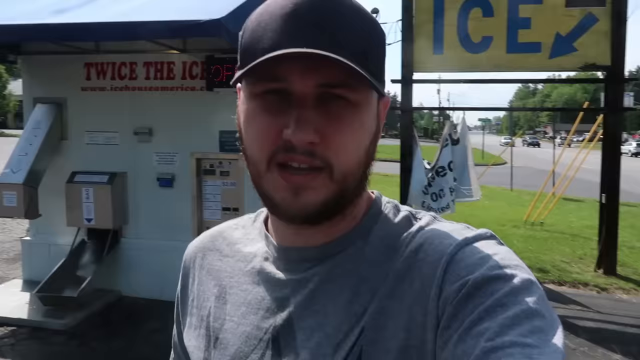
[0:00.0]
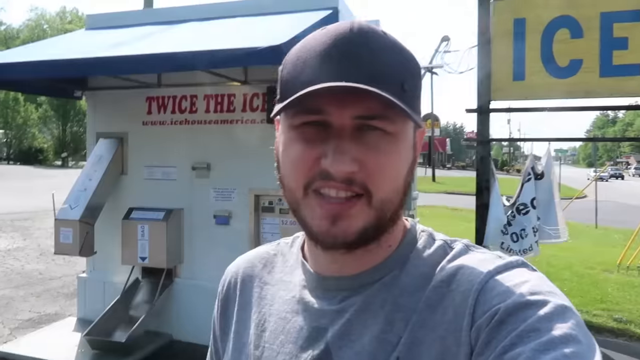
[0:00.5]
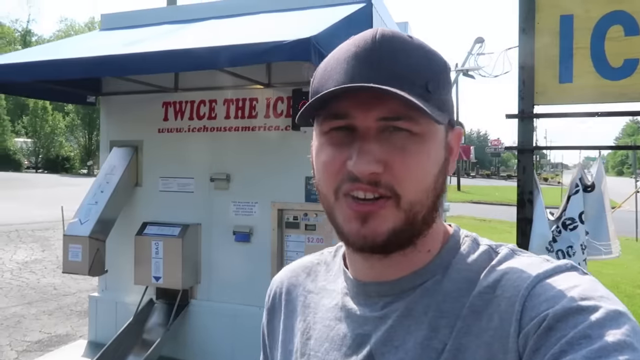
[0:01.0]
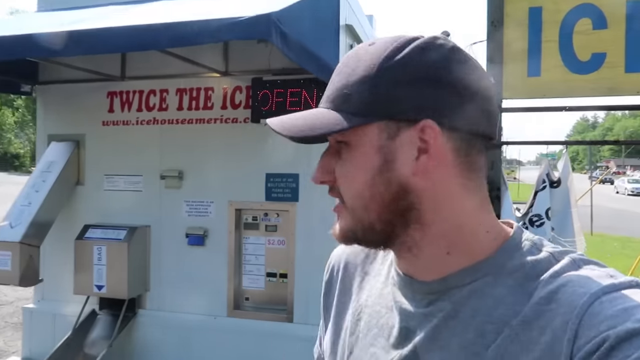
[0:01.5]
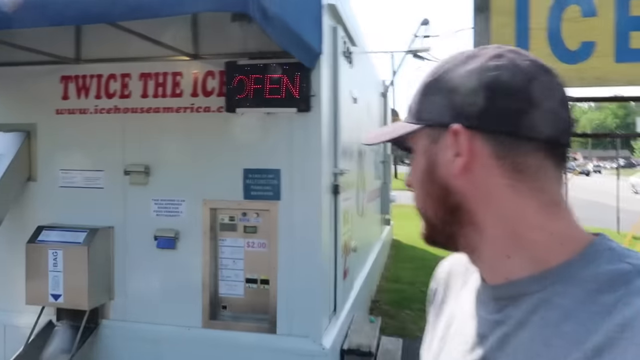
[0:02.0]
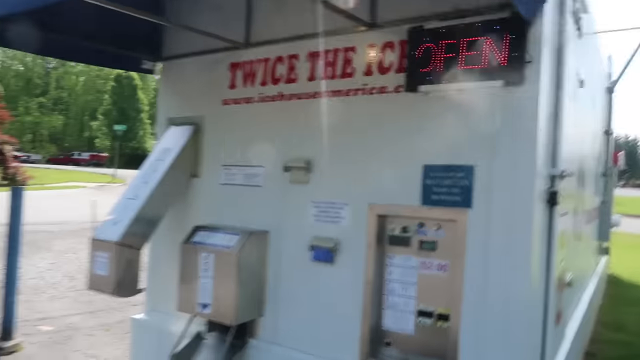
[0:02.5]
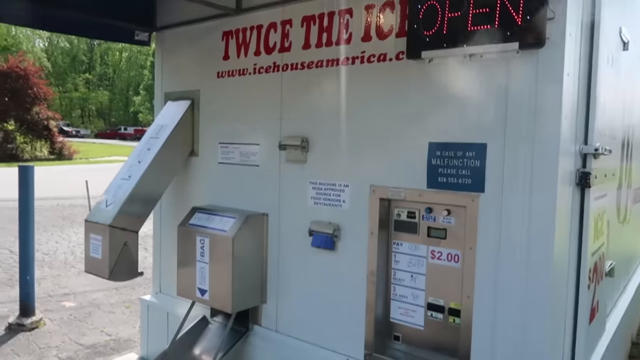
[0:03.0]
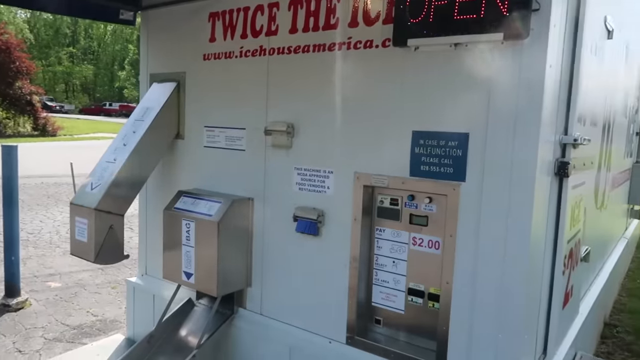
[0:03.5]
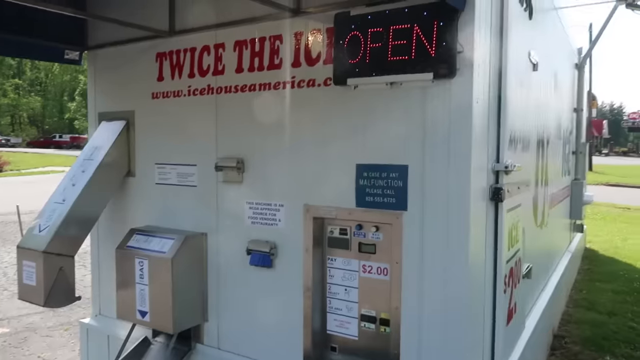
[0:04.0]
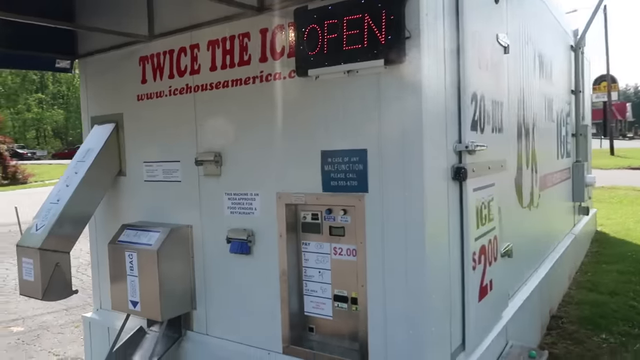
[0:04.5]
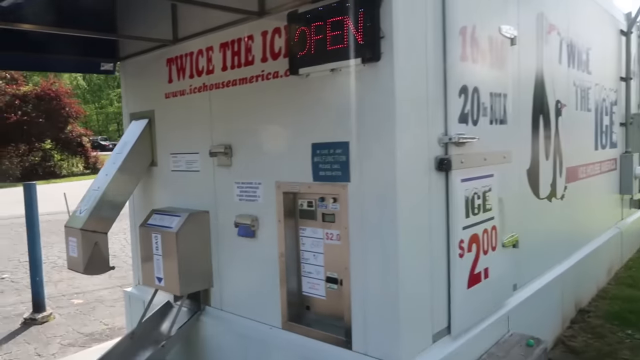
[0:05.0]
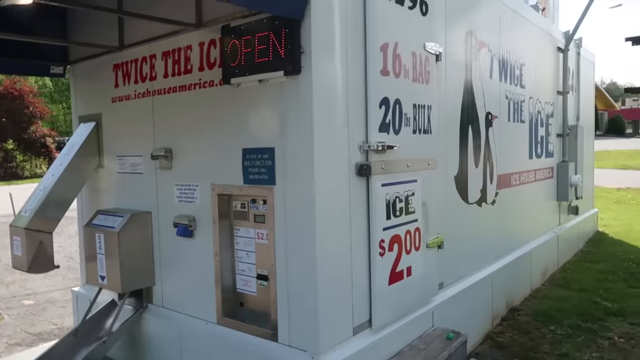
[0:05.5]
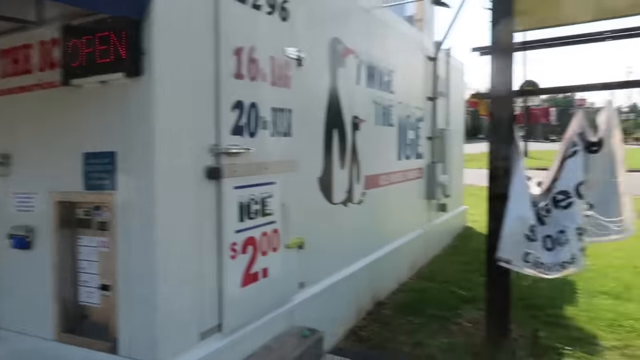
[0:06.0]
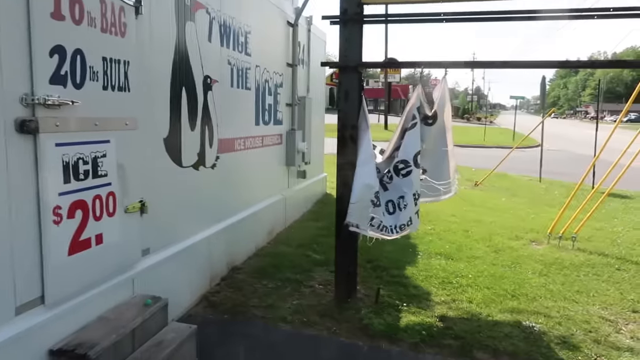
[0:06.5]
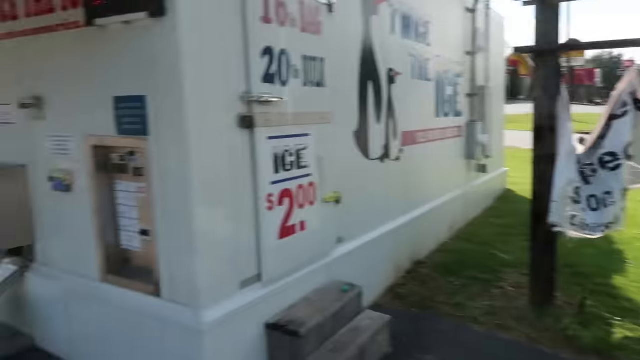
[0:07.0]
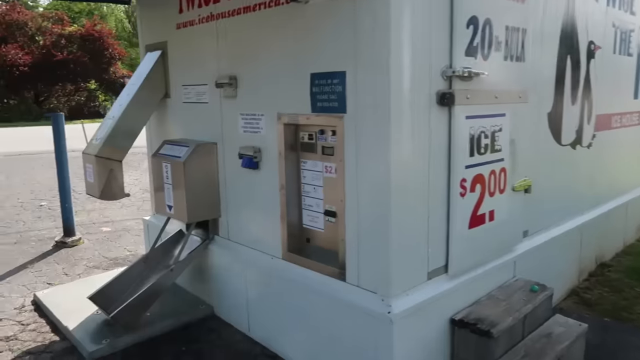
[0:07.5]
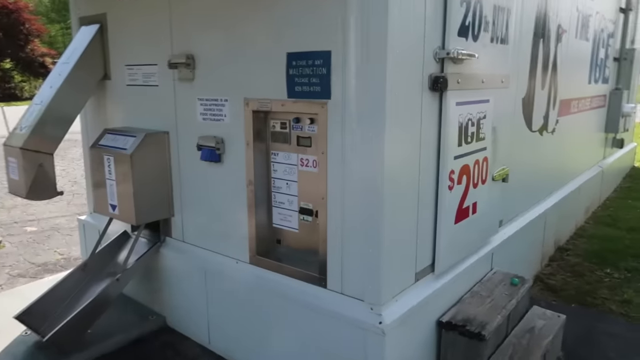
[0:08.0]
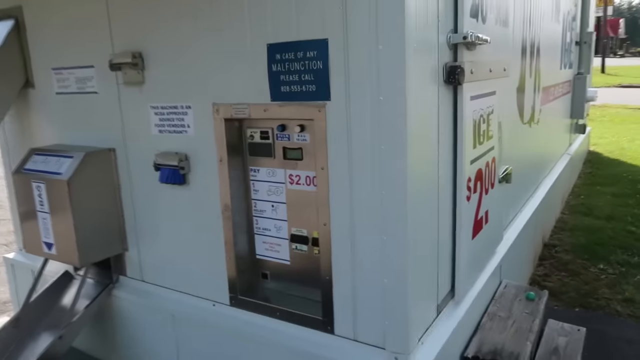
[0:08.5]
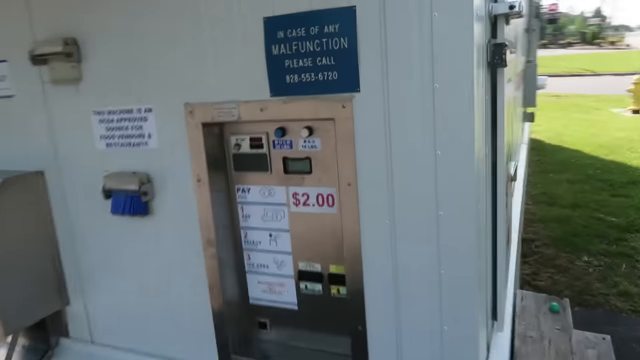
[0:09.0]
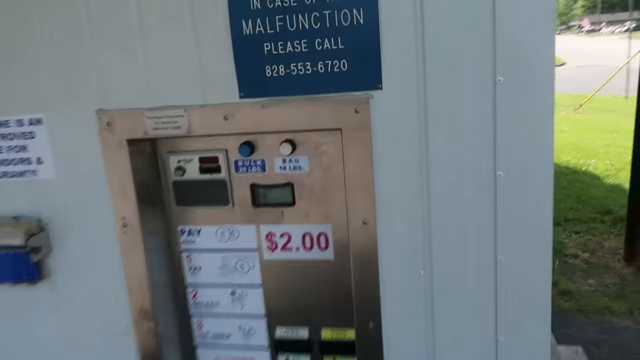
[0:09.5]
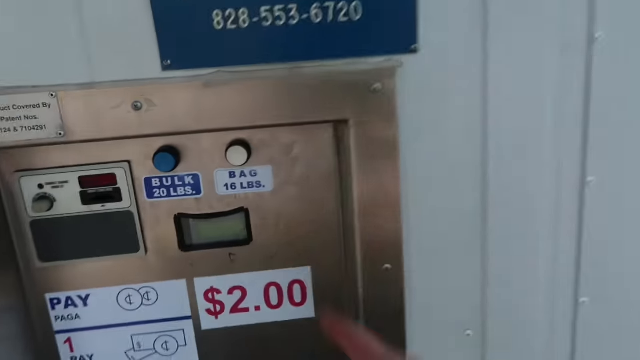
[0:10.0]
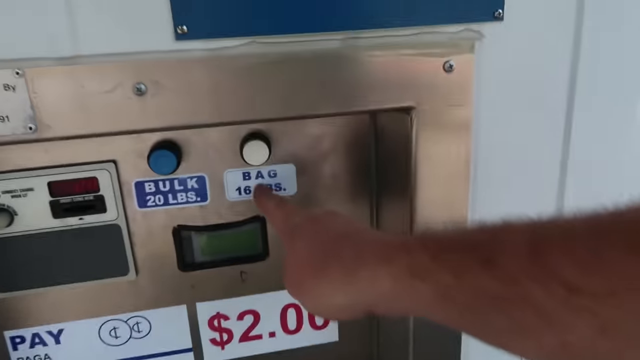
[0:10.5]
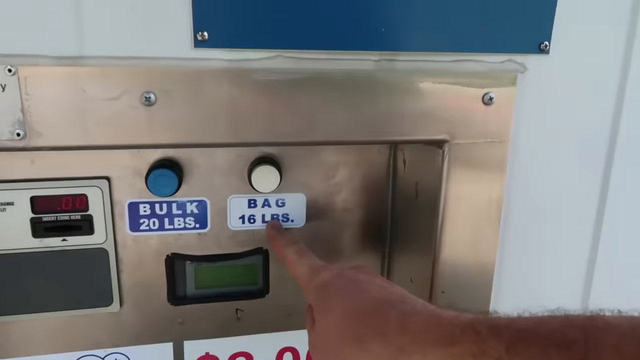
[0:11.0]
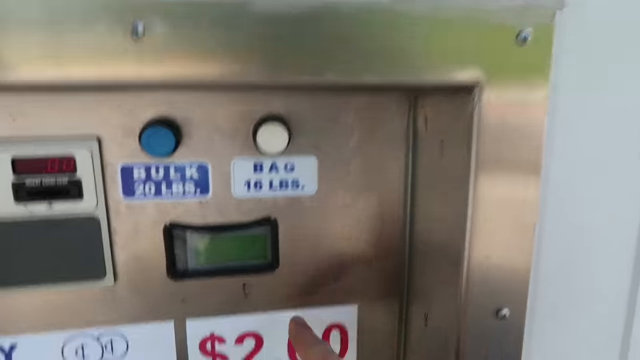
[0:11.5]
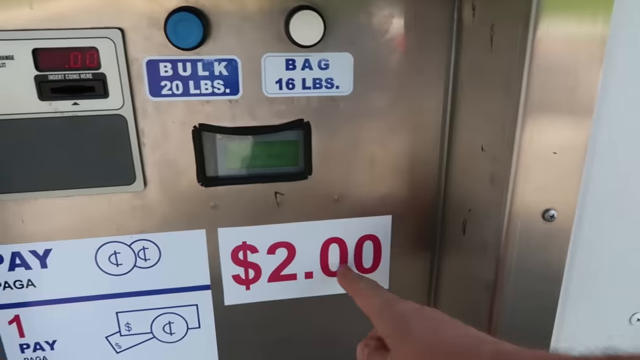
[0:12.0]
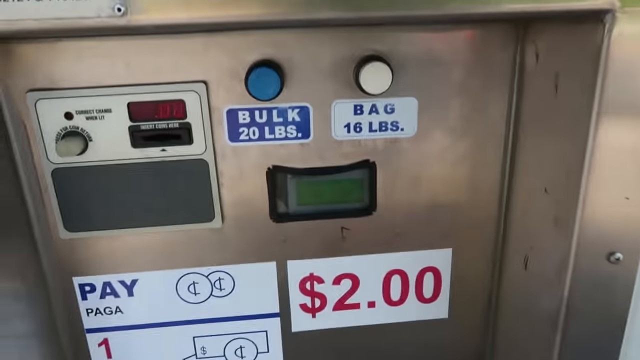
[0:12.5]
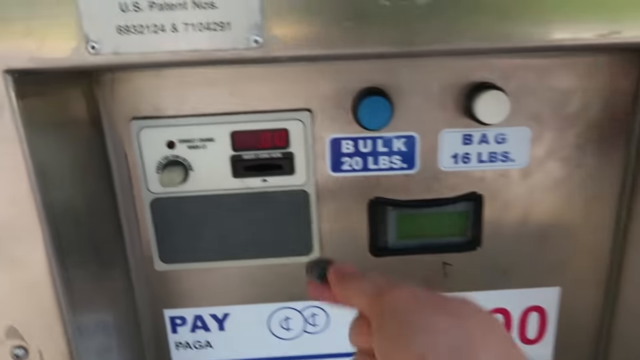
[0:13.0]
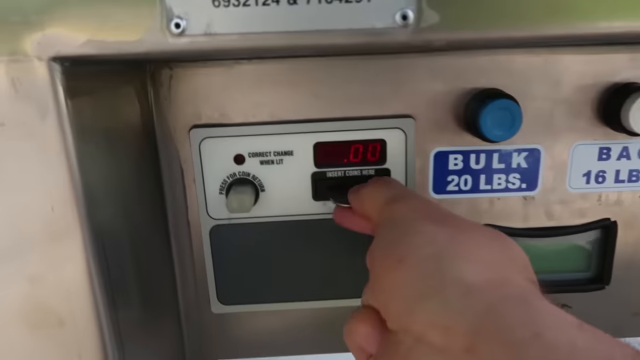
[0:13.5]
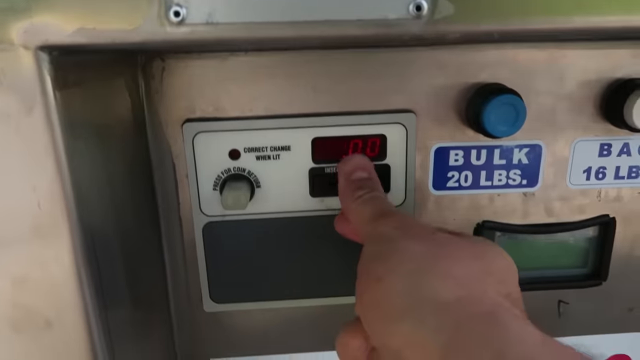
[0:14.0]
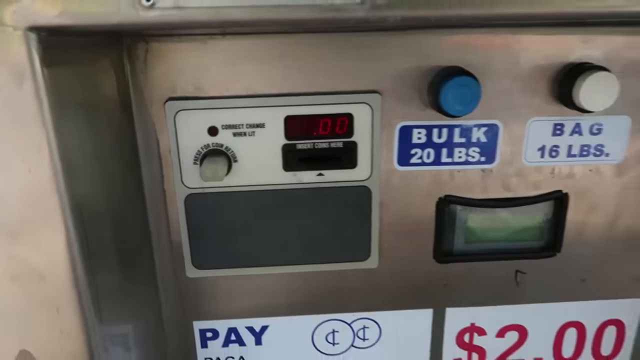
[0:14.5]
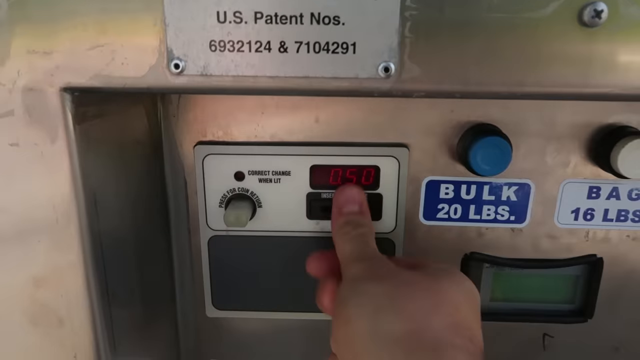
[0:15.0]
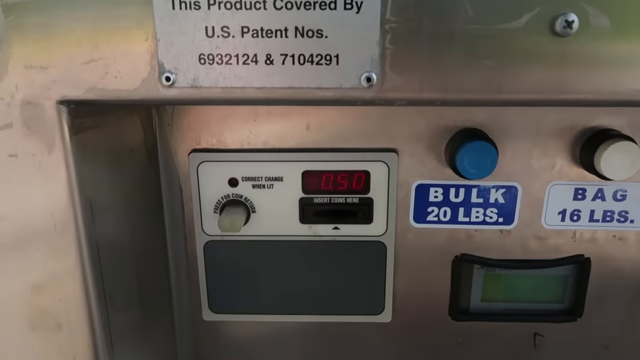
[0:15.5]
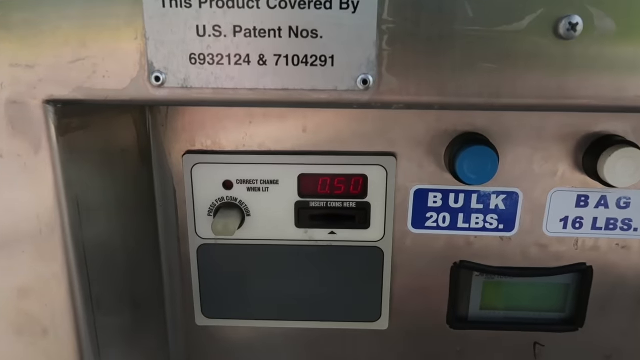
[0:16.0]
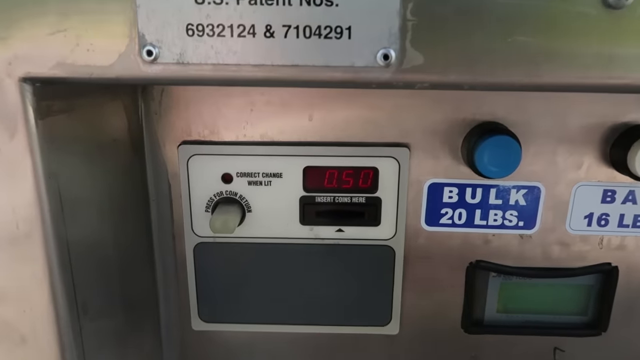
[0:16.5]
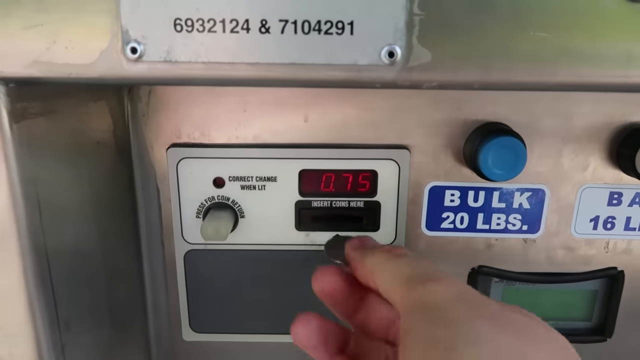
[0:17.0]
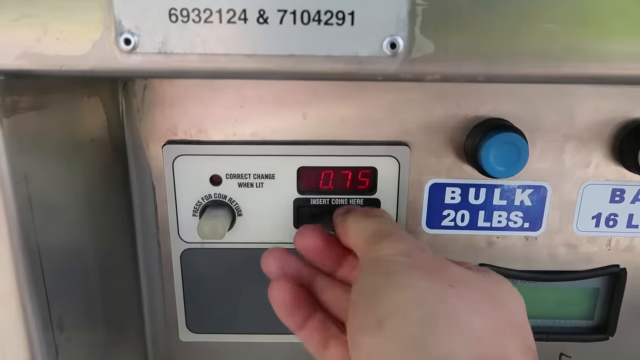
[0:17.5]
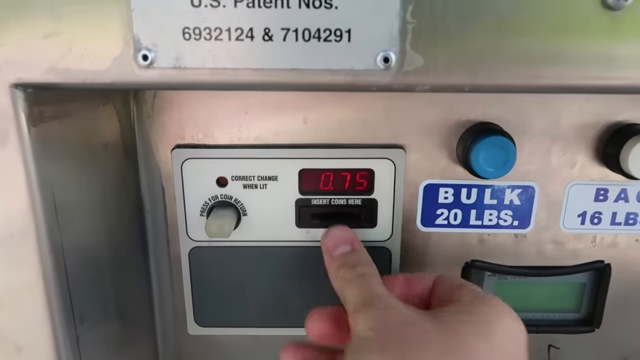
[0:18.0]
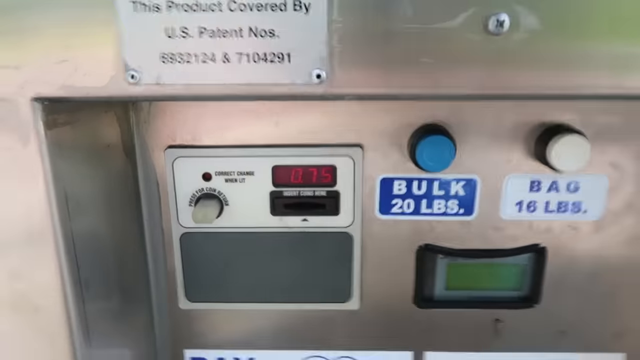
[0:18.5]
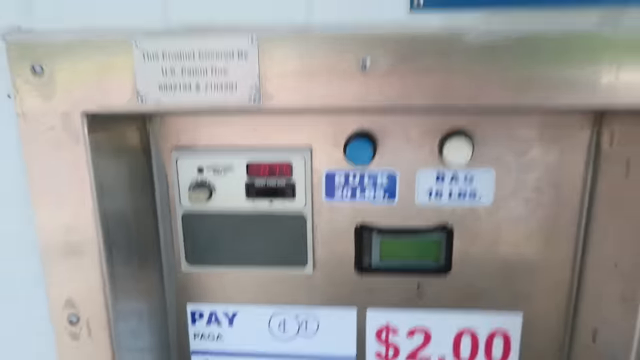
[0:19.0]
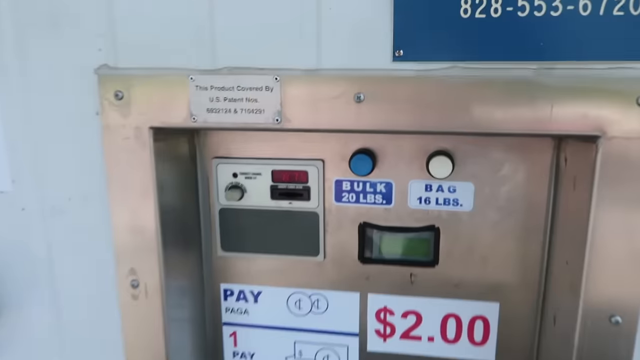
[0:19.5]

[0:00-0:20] A man holding the camera appears first; he wears a black cap and a gray shirt and has a beard. Behind him is an ice machine that is white with a blue roof. Toward the top of the ice vending machine, "twice the ice" is written in red, and below that it says "www.icehouseamerica.com". The setting is outside, beside a road. The man then turns the camera toward the ice vending machine and shows its front and side. He gets closer to show the part of the machine where money is inserted and the amount of ice is chosen. There is a blue button, and to its right is a white button. Underneath the blue button it says "bulk, 20 pounds", and underneath the right button it says "bag, 16 pounds". A sign on the machine says "$2". The man inserts a coin into the slot, then inserts another coin.